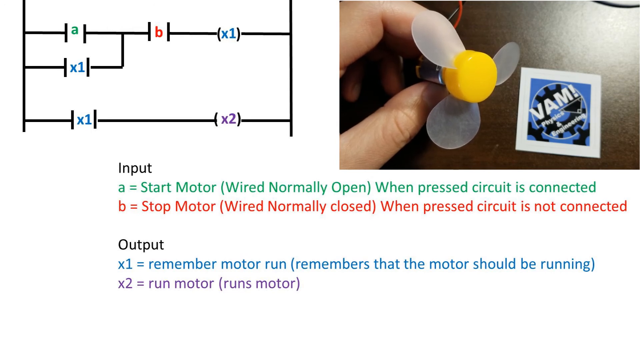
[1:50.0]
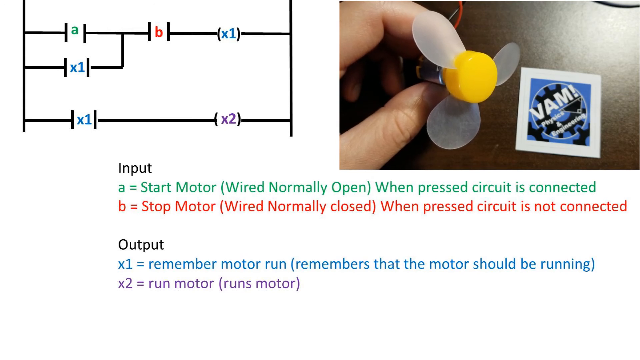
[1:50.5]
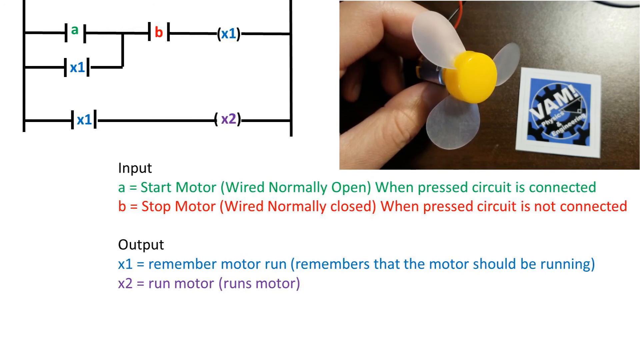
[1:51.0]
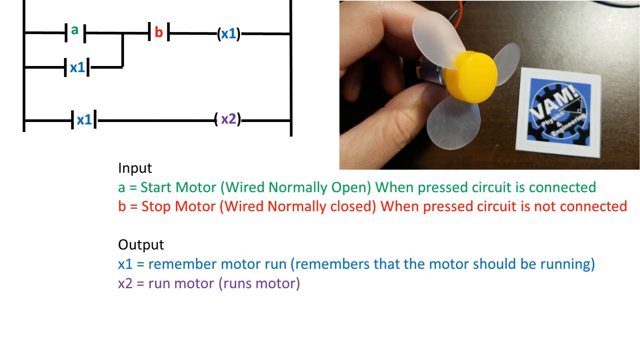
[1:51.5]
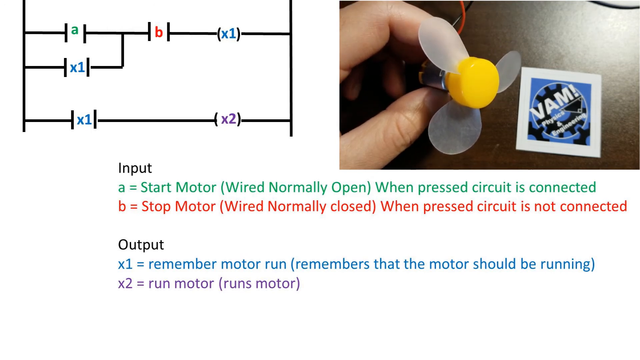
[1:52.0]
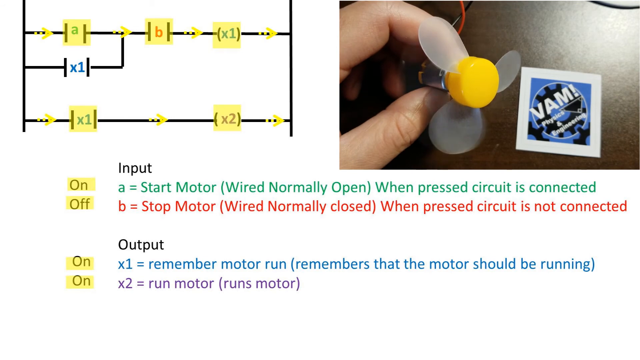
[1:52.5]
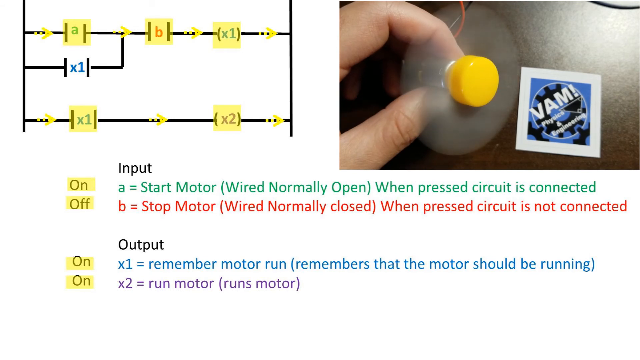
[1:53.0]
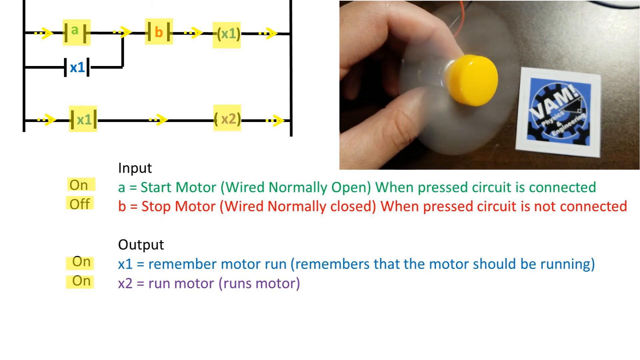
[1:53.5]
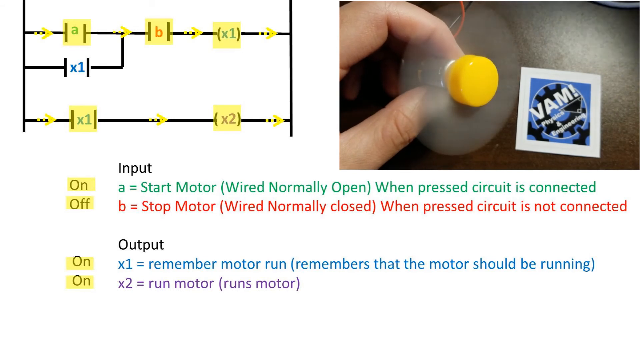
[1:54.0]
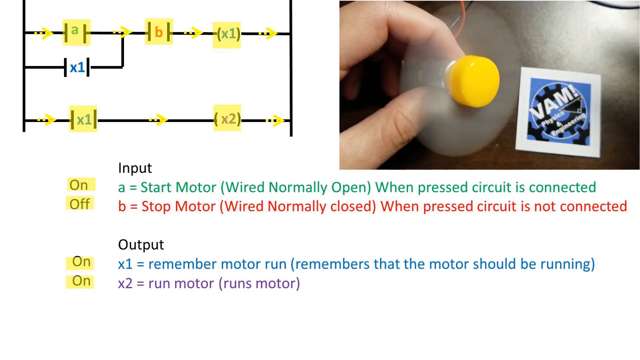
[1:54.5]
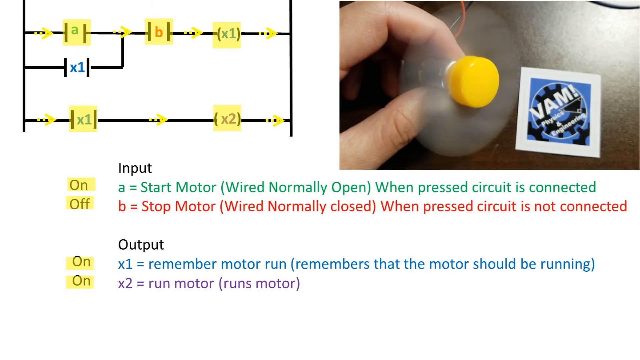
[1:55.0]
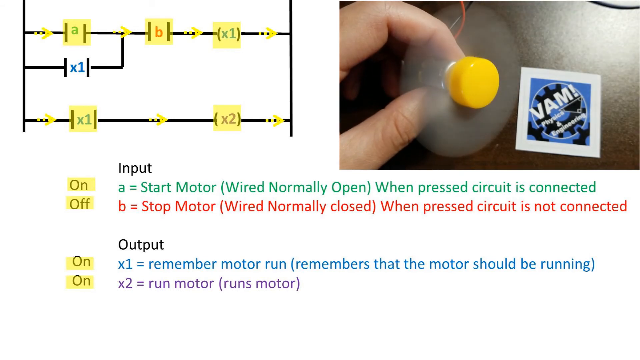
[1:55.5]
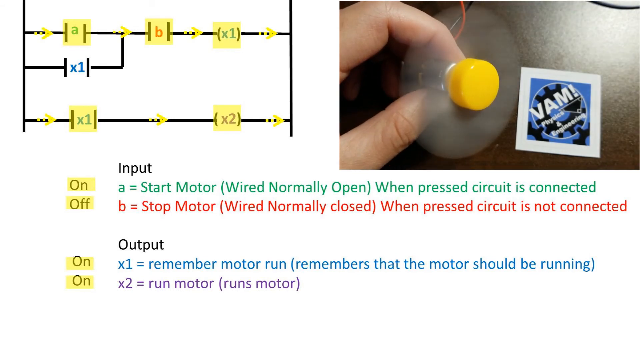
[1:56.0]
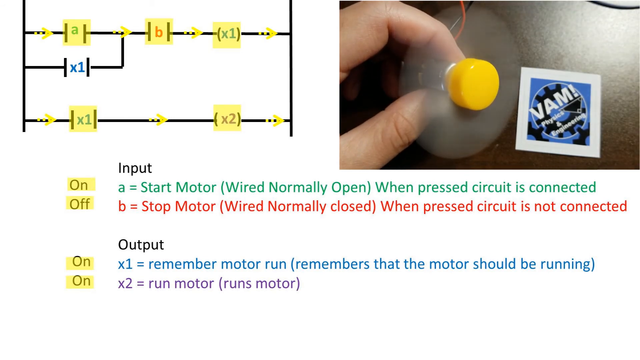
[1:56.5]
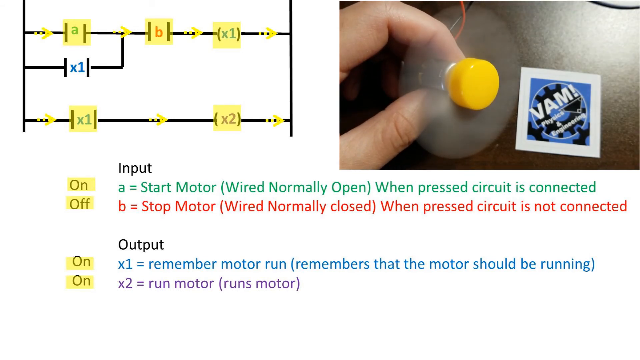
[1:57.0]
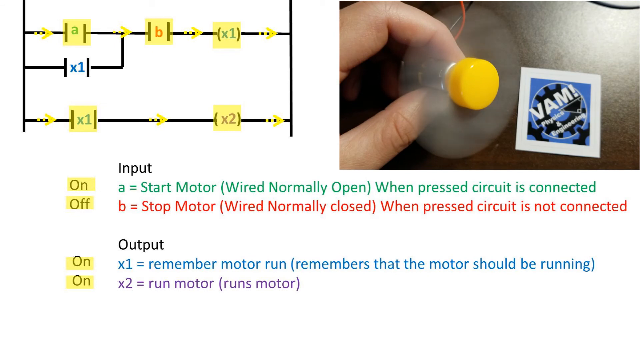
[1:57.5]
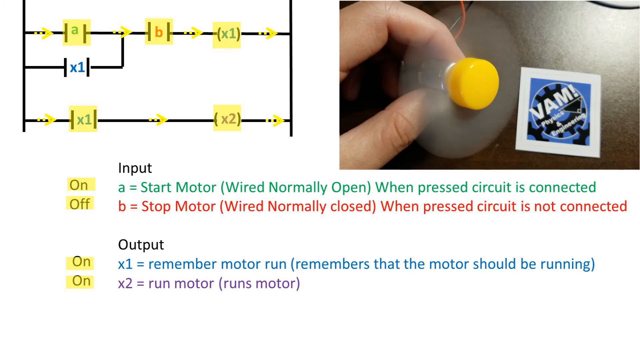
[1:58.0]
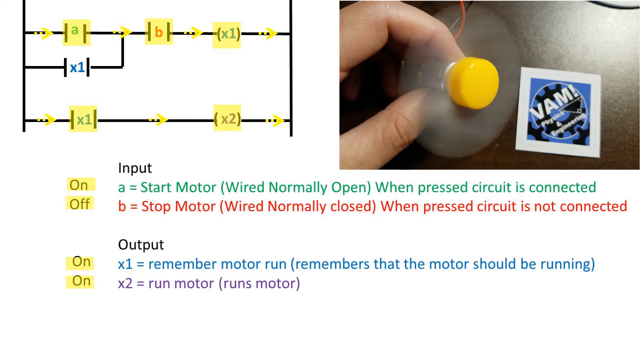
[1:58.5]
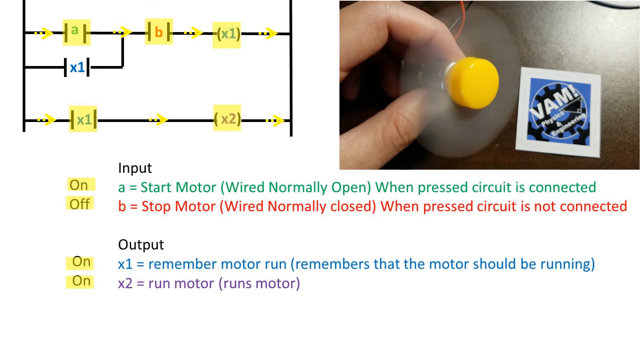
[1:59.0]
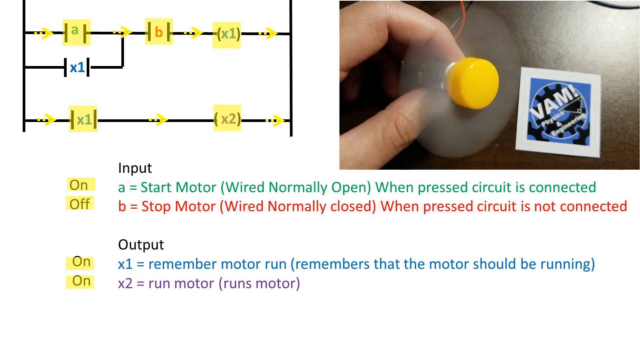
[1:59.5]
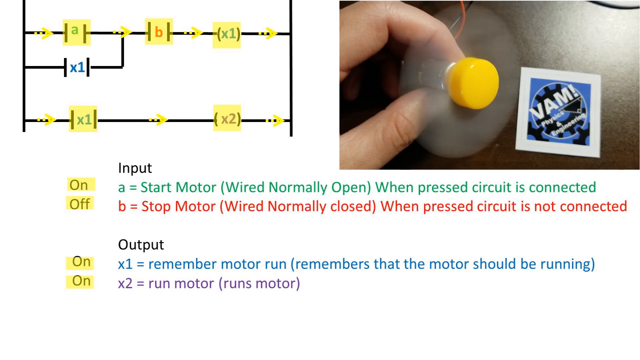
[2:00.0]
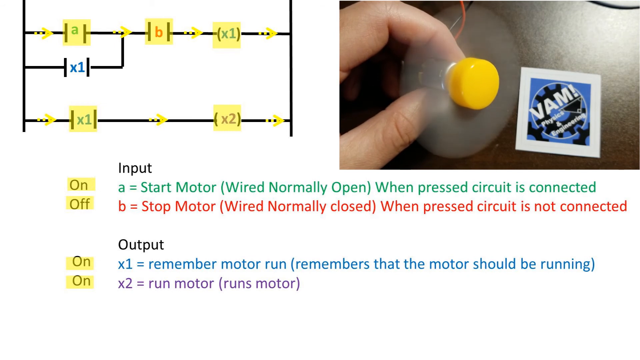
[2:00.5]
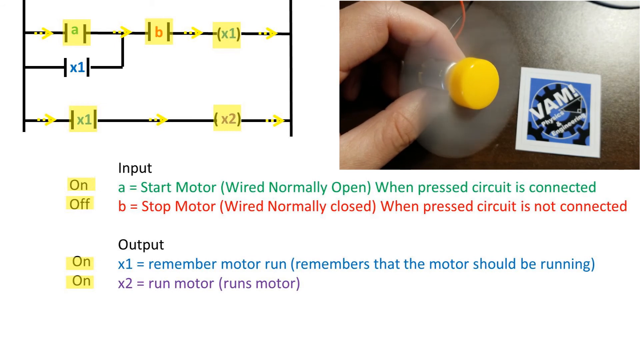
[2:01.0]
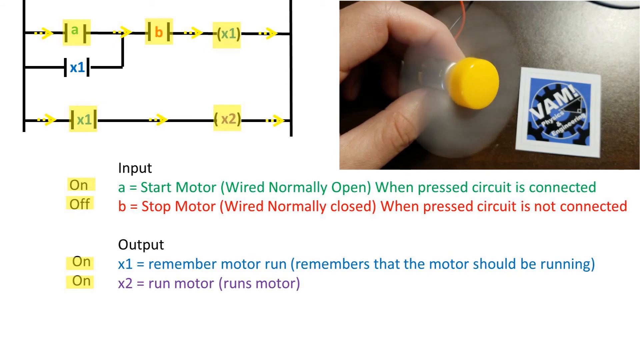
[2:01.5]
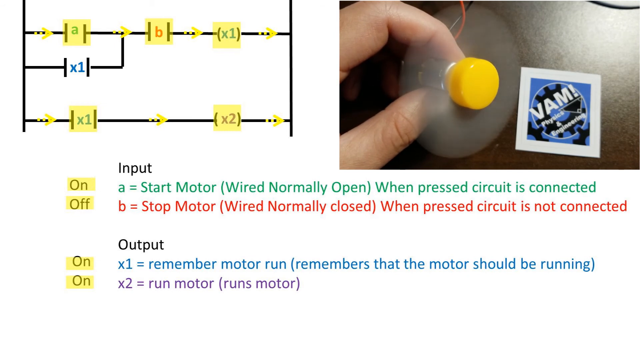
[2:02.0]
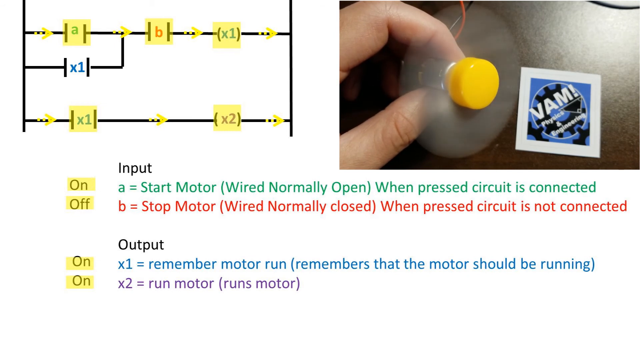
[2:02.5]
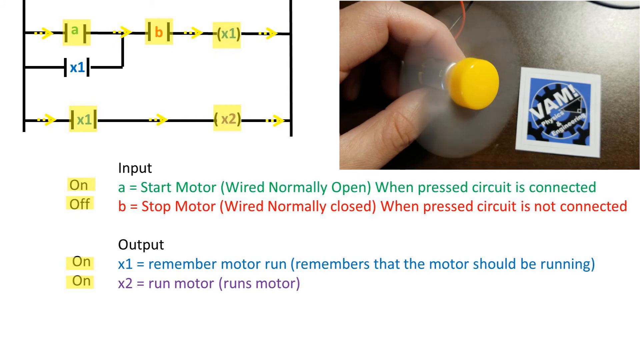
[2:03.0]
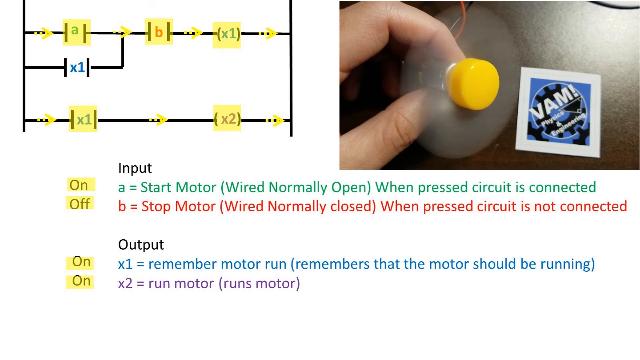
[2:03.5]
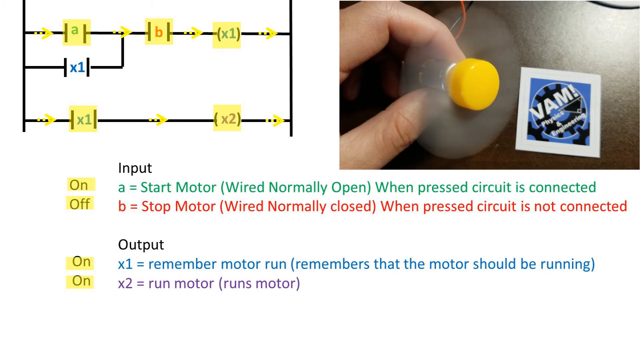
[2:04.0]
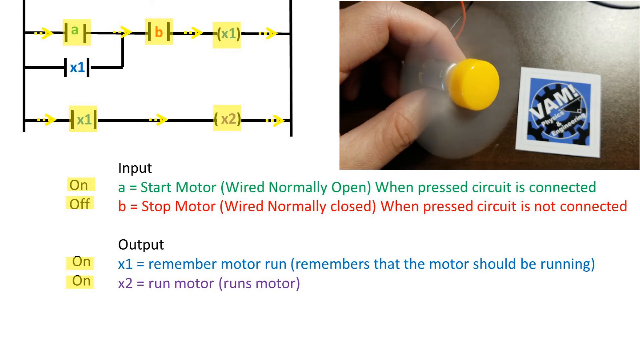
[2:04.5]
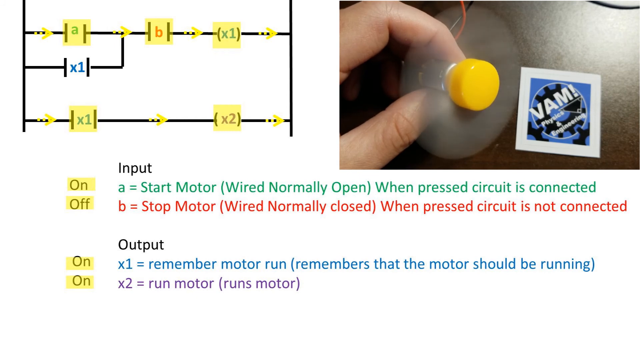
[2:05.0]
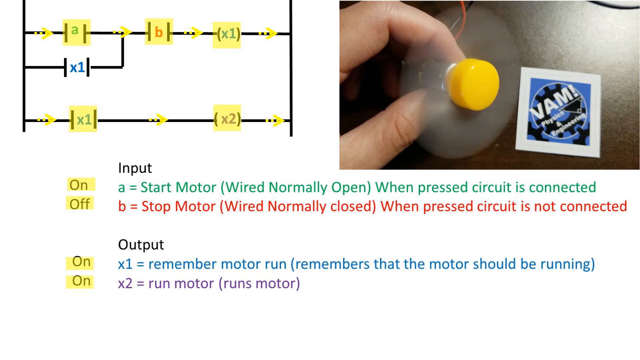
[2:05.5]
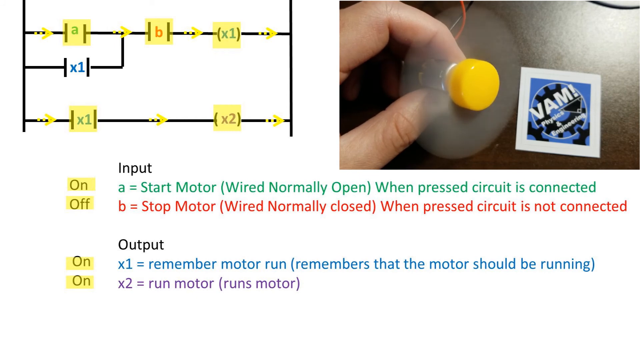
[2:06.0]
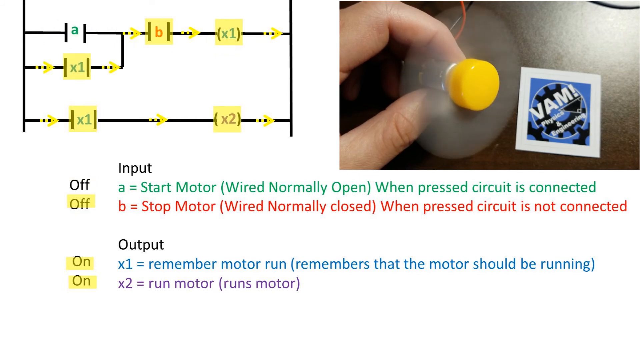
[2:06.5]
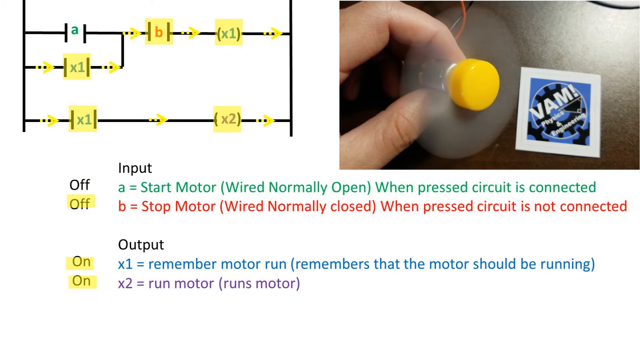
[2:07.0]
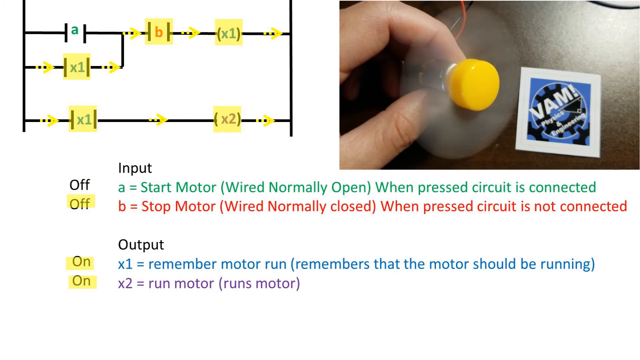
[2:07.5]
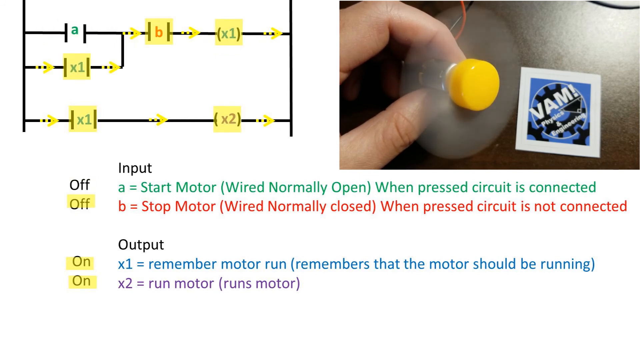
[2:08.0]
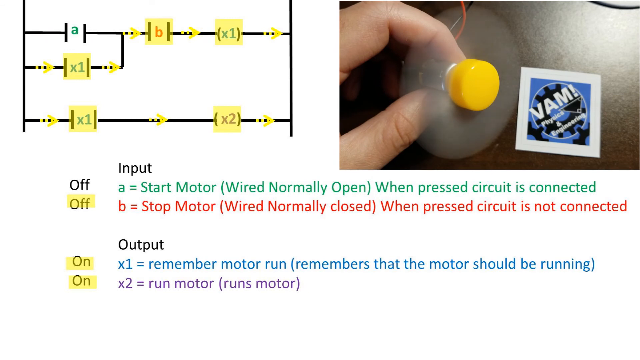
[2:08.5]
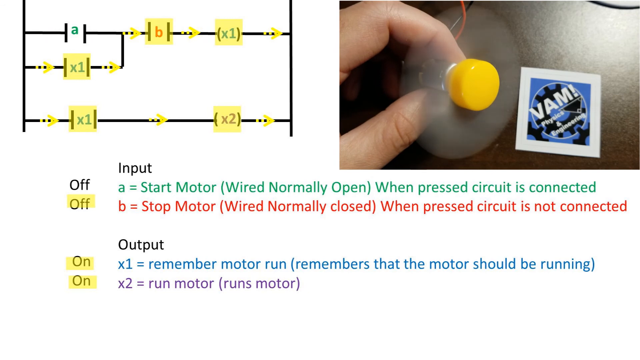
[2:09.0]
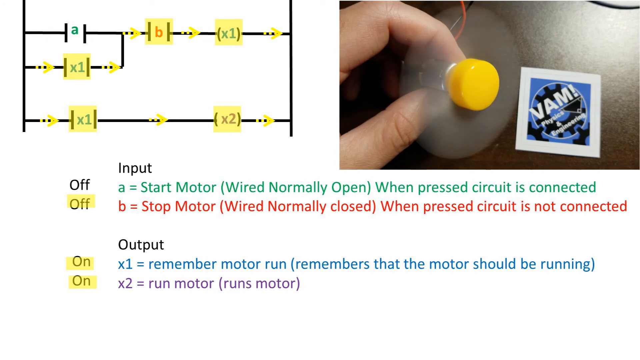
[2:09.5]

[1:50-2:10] The introduction for the mechatronics appears, followed by a second page with instructions for mechatronics logic to logic gates, laid out as a table with drawings and arrows. On the left side is a blue table containing three tables with instructions and numbers. Next is a section where A, B and "times 2" are shown. Input A reads "start motor wired normally open when press circuit is connected", and B, written in red, reads "stop motor wired normally closed when press circuit is not connected"; these apparently are the inputs. The output reads "times 2, run motor". The motor then runs; the object the hand is holding is the motor.